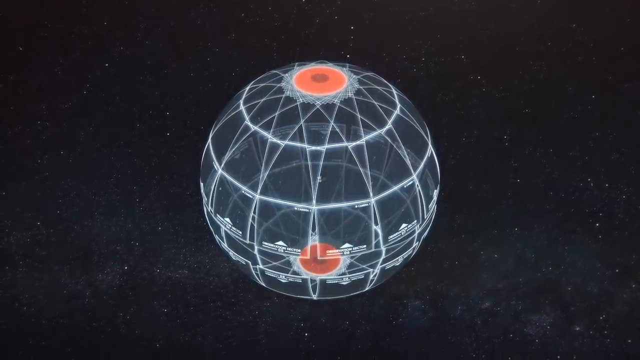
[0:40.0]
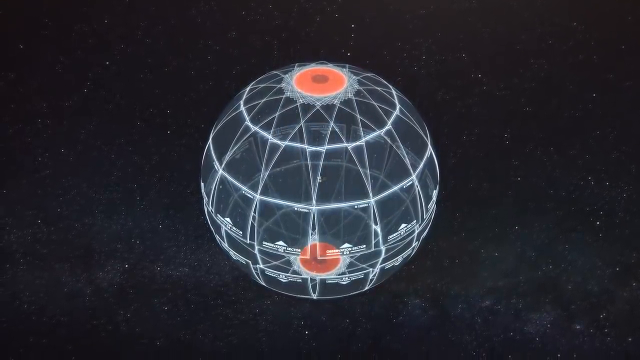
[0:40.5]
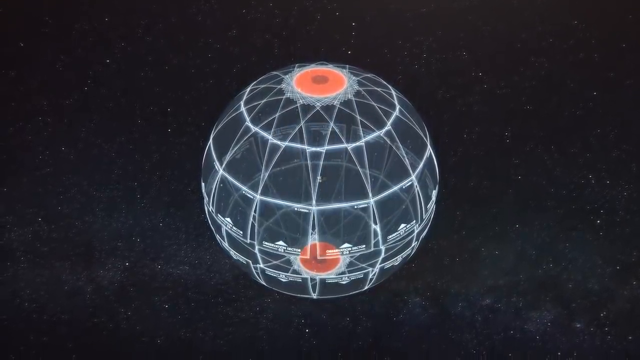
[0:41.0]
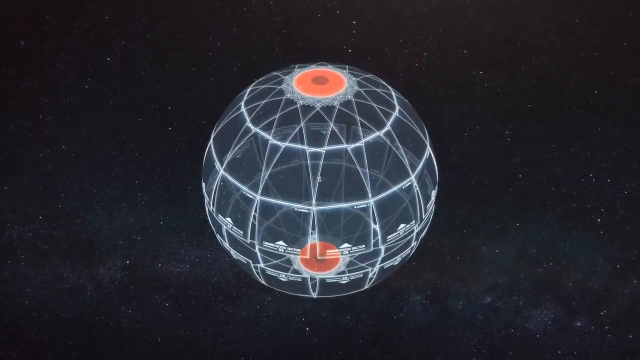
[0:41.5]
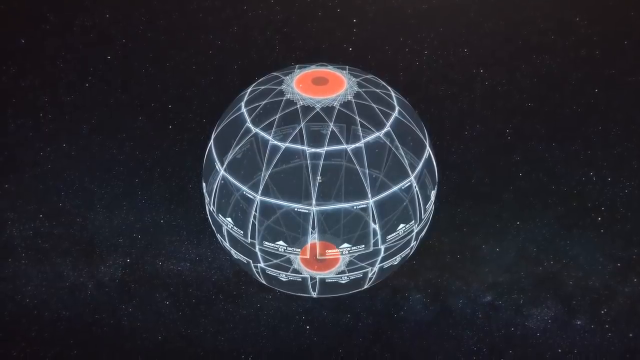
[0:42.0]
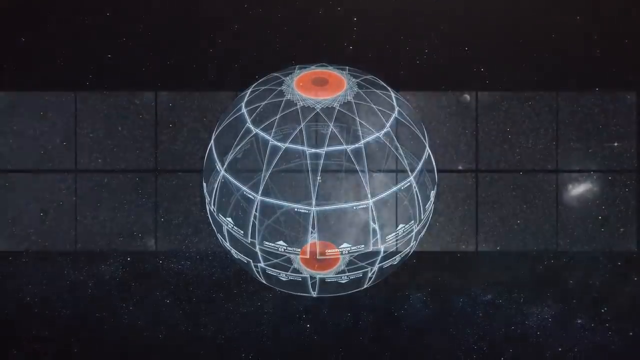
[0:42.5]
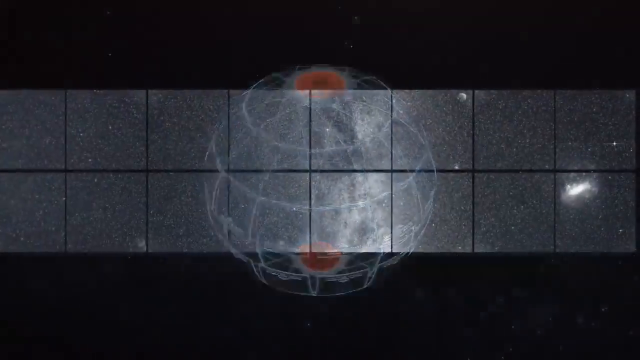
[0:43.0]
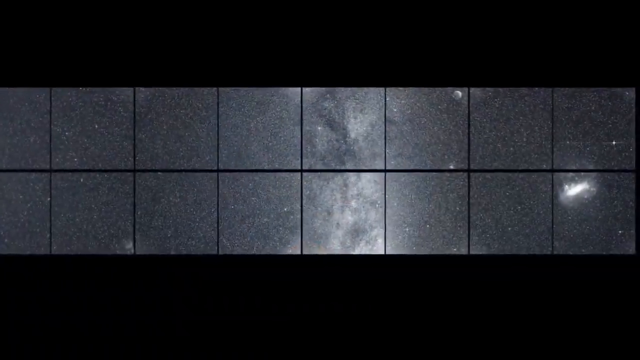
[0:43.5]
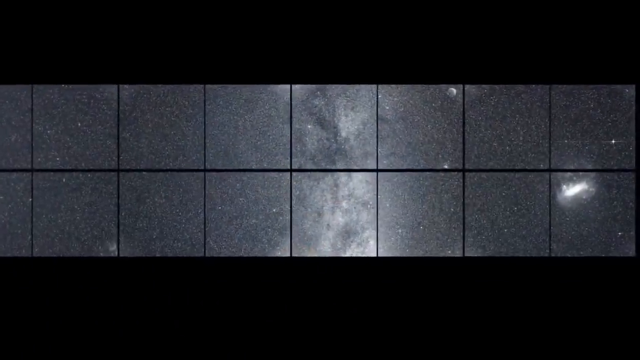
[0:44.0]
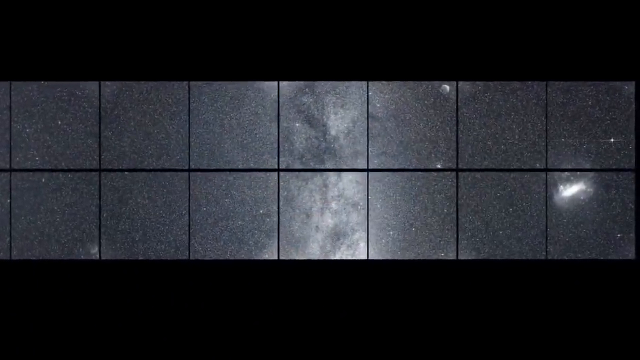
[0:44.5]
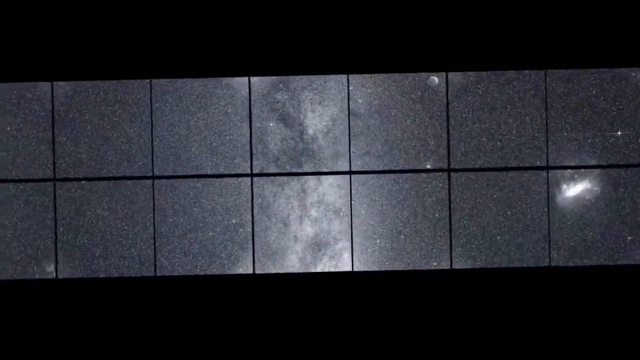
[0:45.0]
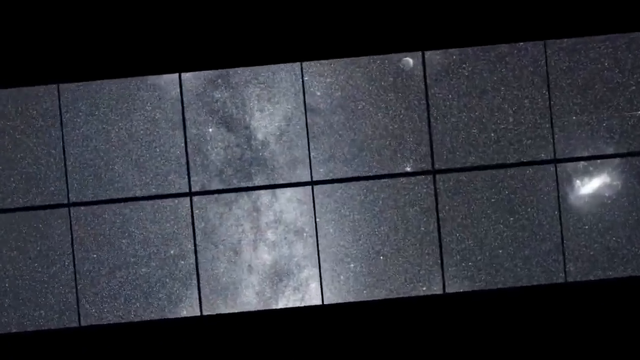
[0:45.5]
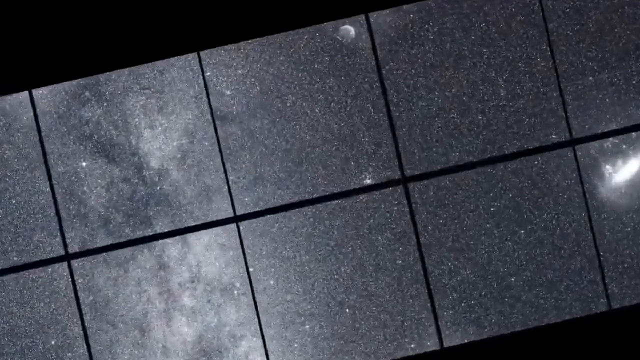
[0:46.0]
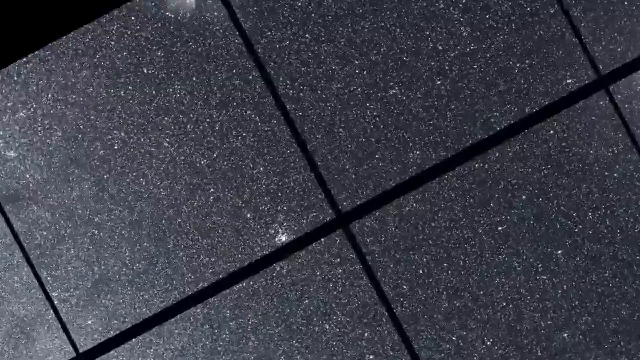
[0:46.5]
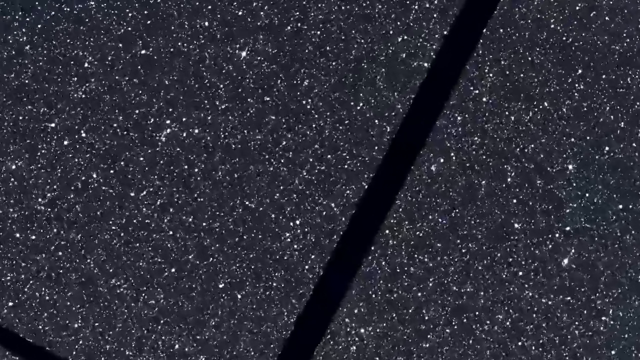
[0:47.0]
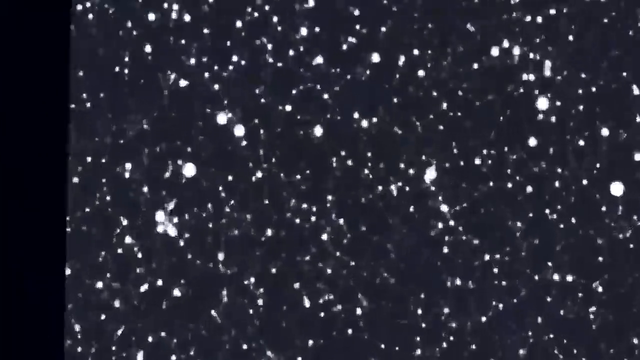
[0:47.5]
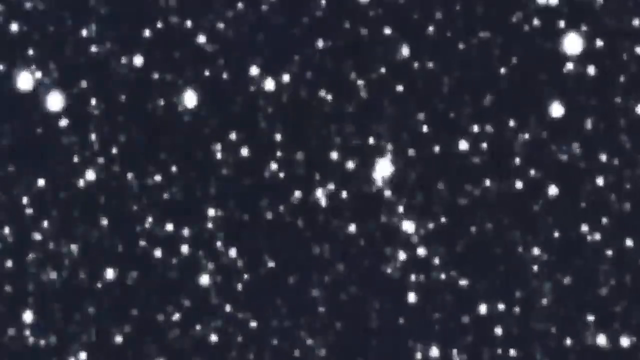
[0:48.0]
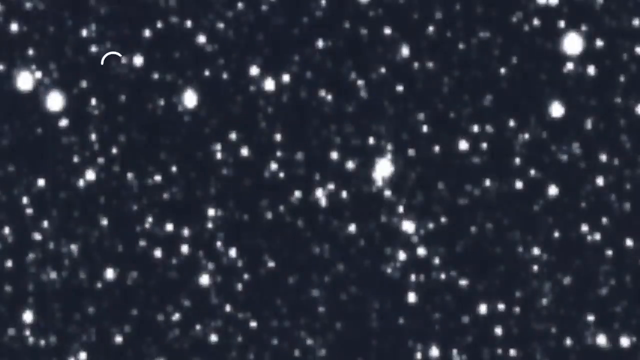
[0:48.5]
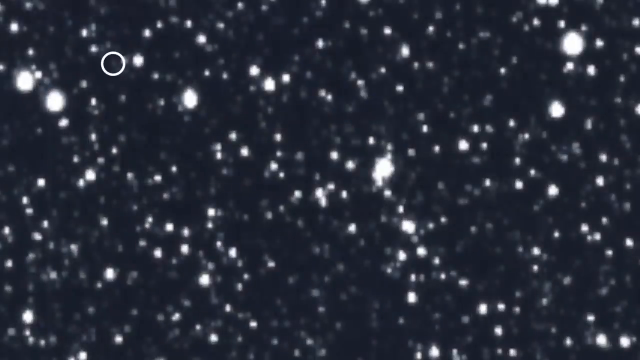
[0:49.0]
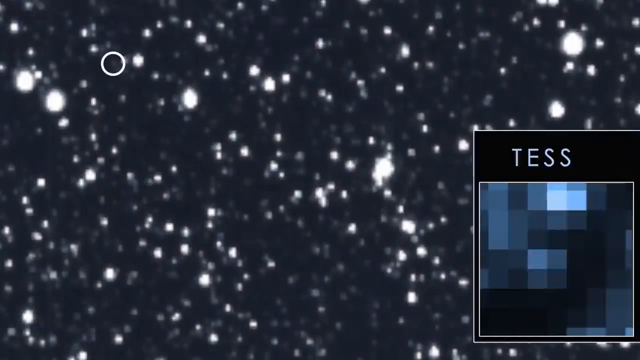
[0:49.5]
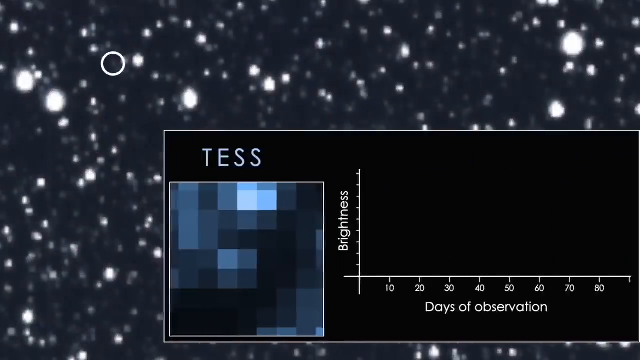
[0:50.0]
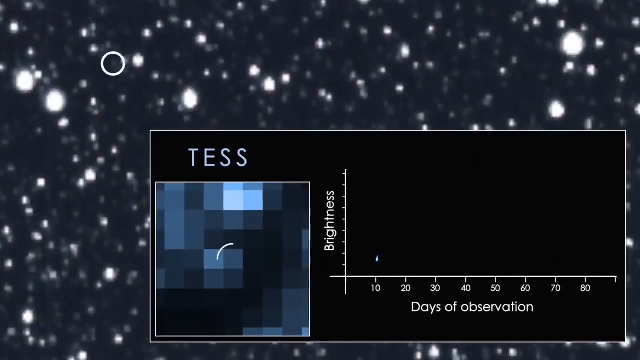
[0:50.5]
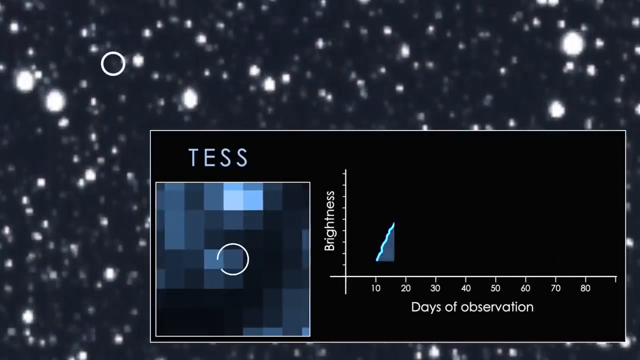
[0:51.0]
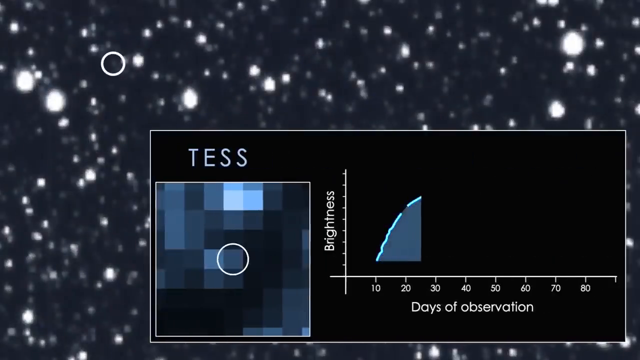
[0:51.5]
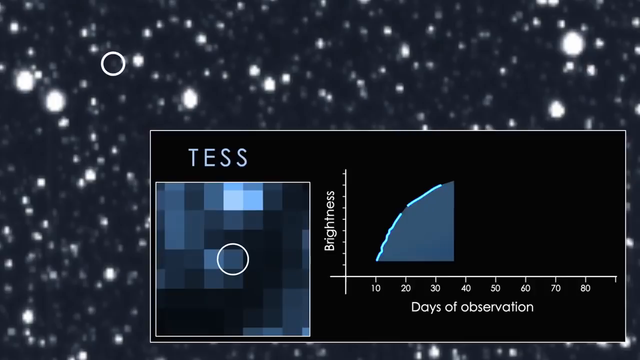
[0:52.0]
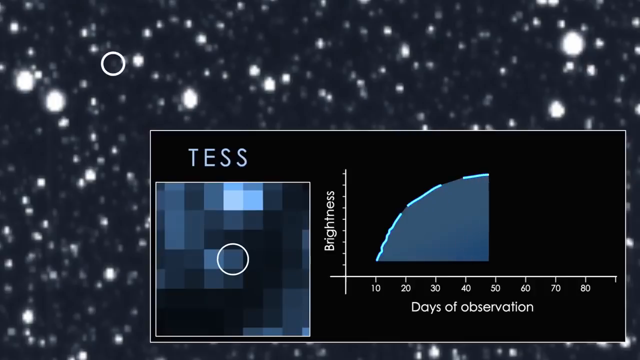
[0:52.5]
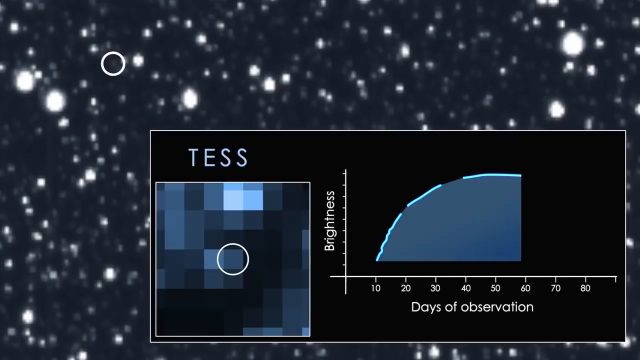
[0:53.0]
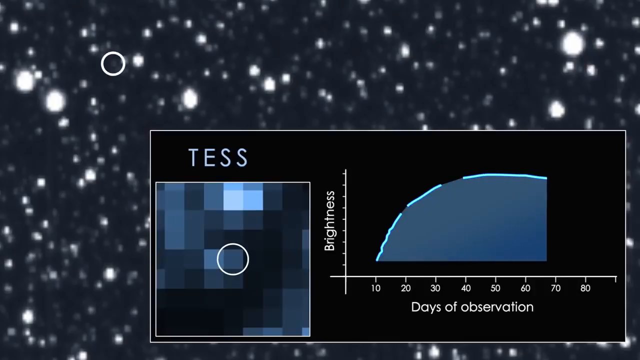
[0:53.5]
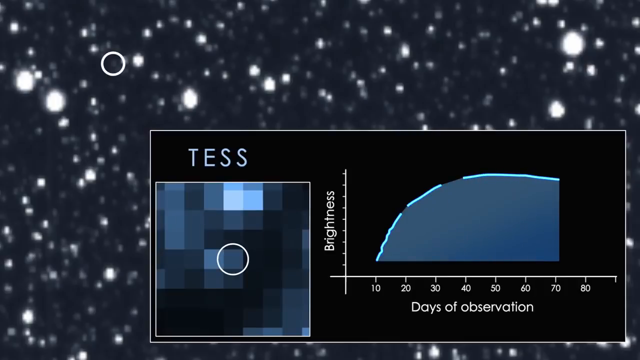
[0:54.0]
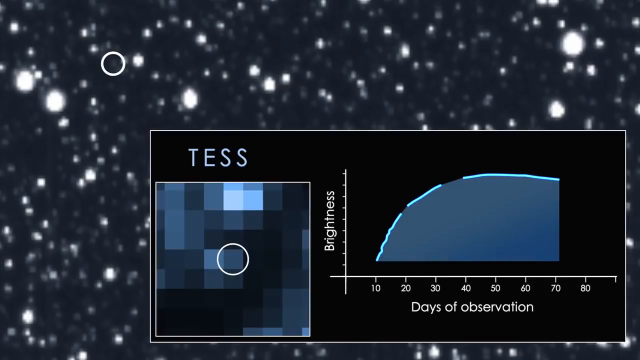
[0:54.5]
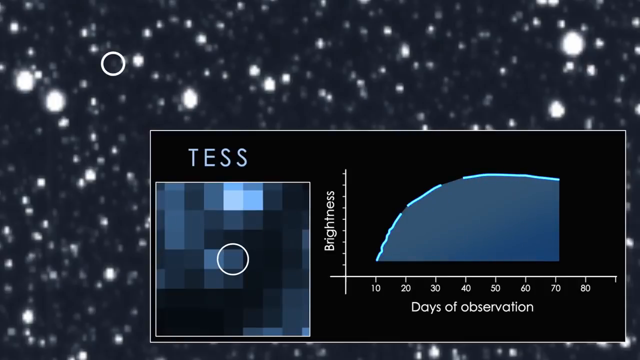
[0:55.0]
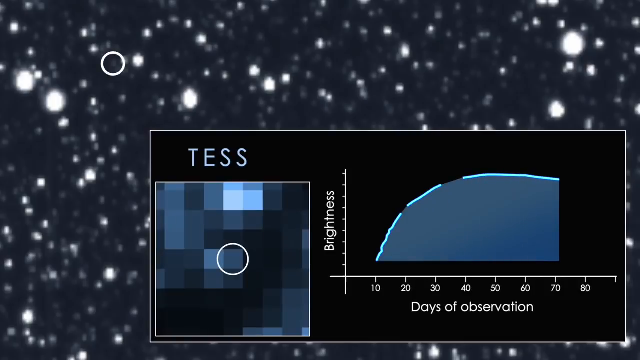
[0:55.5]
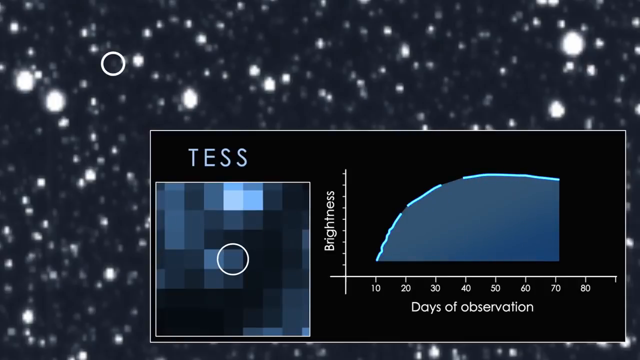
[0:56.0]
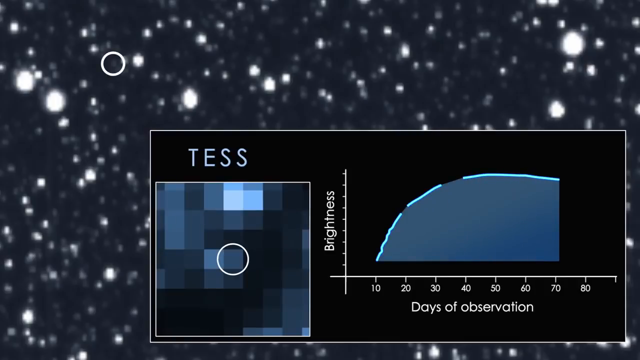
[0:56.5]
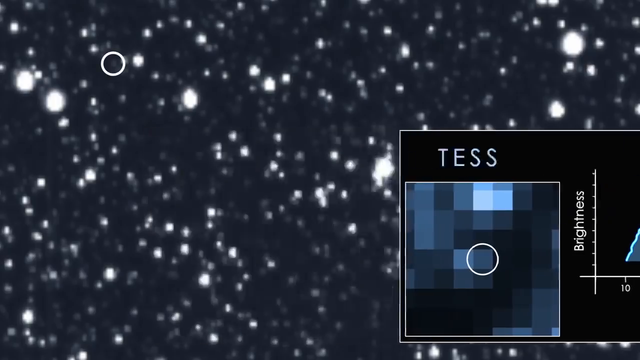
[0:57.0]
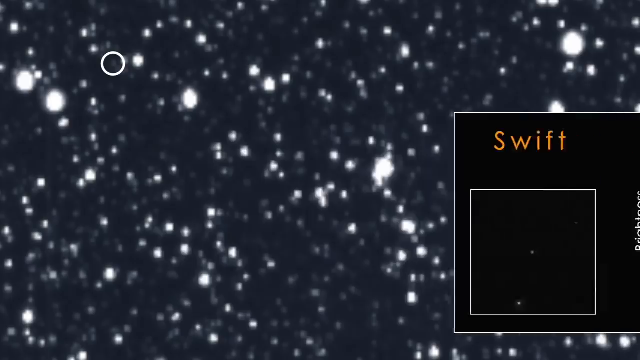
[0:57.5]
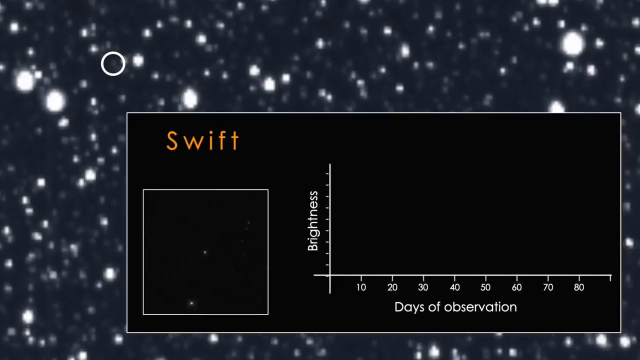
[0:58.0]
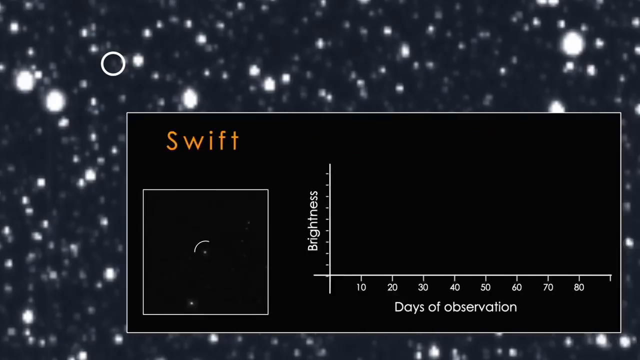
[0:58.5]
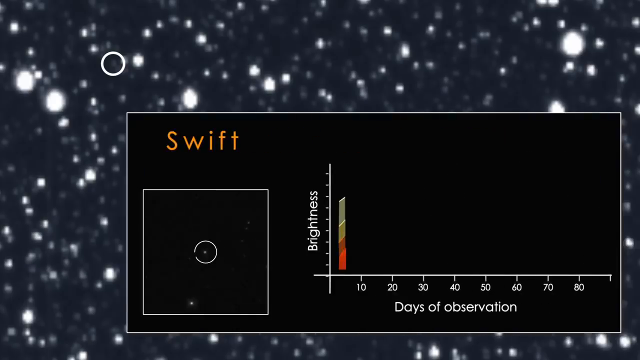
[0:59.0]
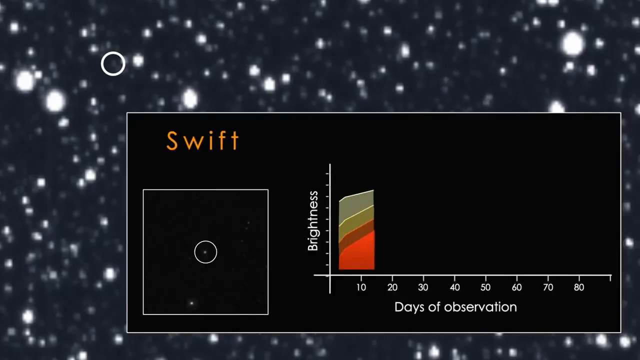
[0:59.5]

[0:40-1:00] The image turns into a world map and a globe.